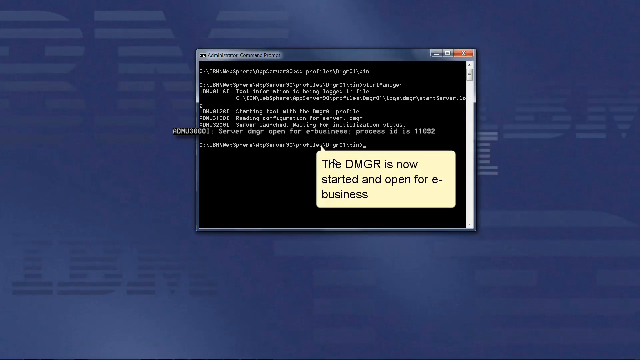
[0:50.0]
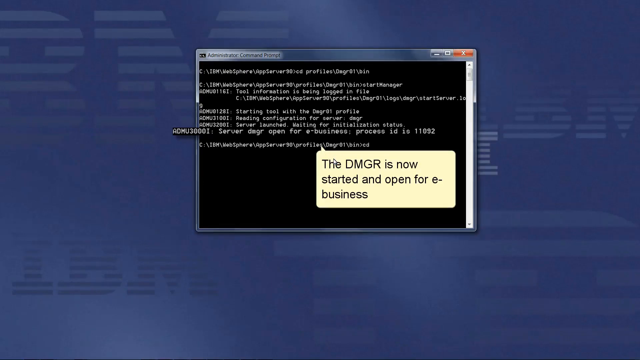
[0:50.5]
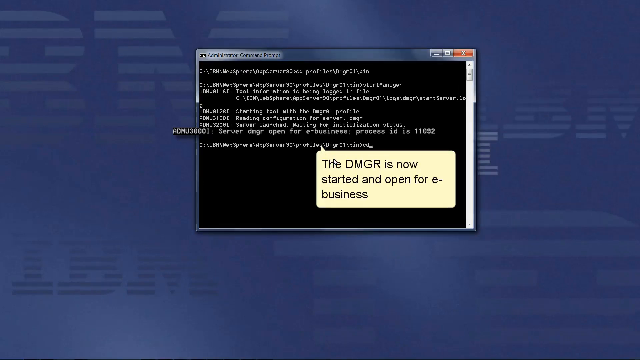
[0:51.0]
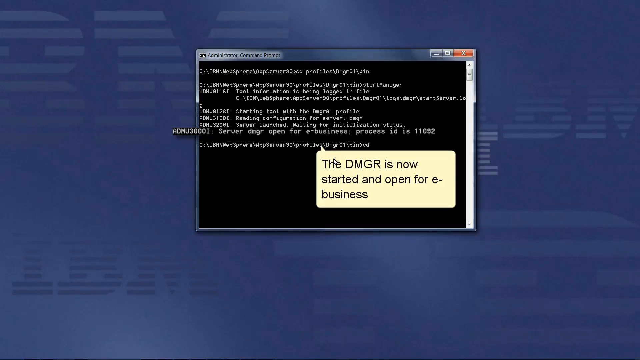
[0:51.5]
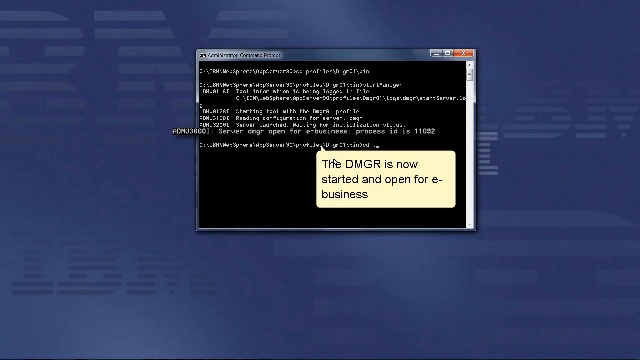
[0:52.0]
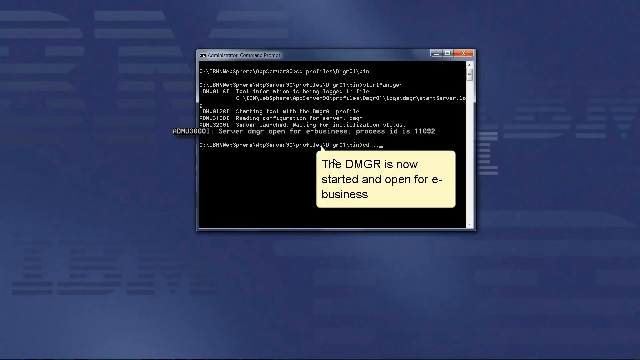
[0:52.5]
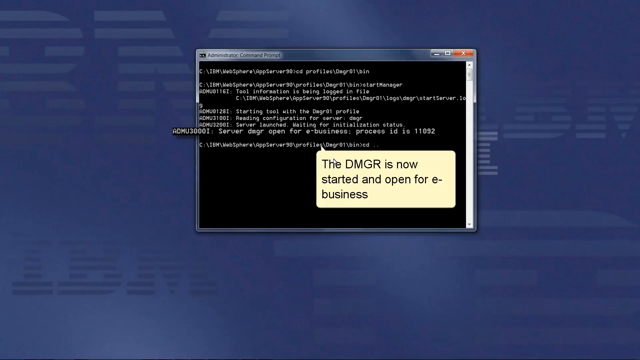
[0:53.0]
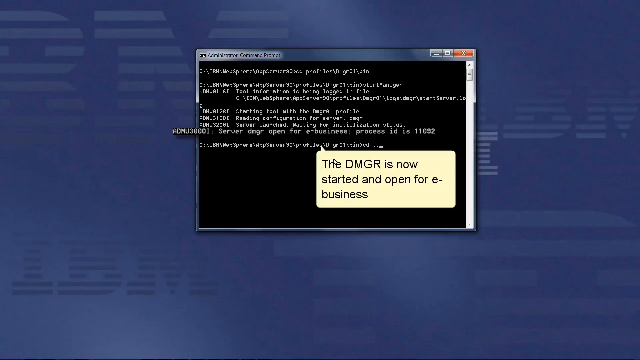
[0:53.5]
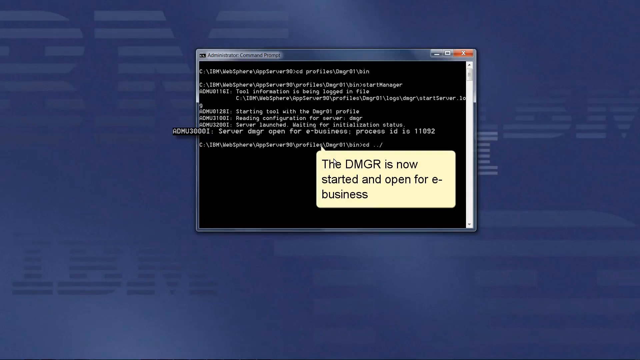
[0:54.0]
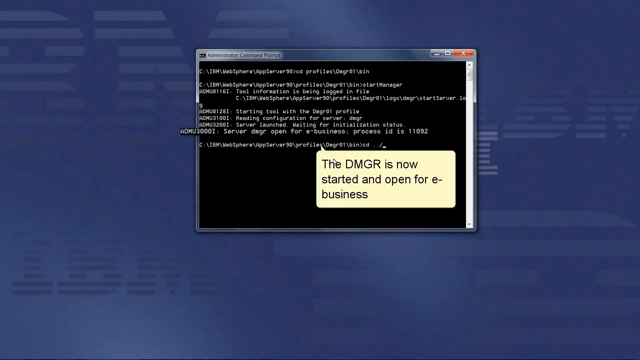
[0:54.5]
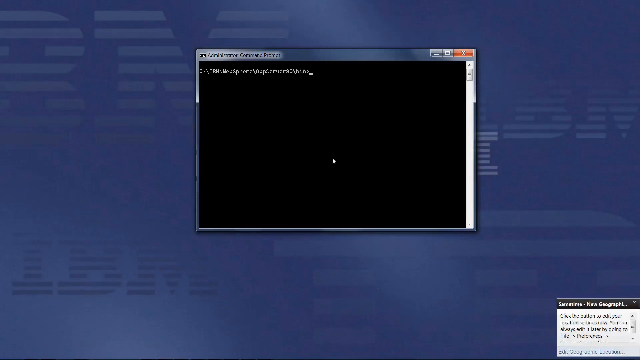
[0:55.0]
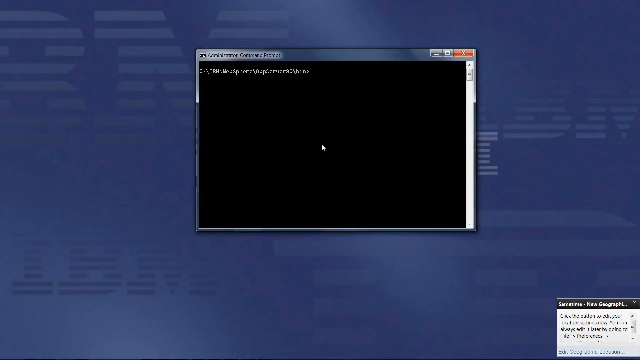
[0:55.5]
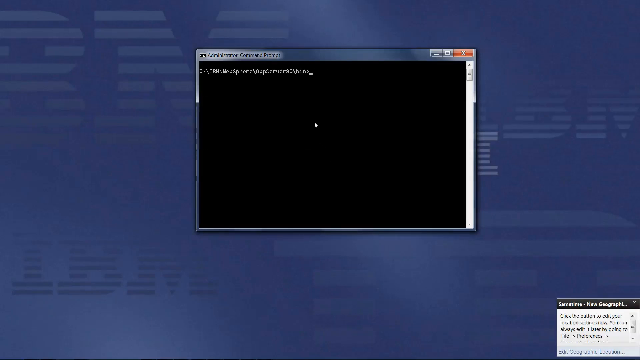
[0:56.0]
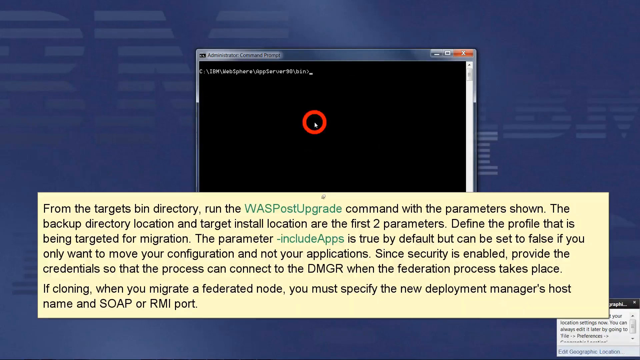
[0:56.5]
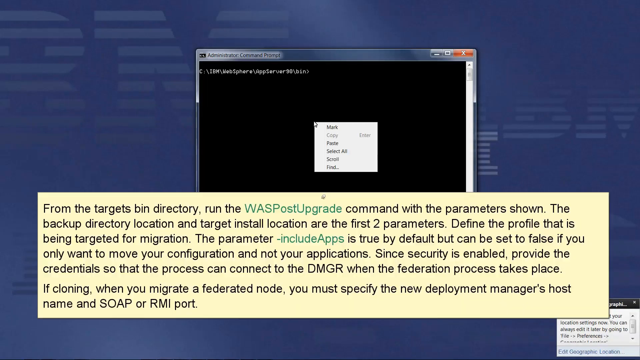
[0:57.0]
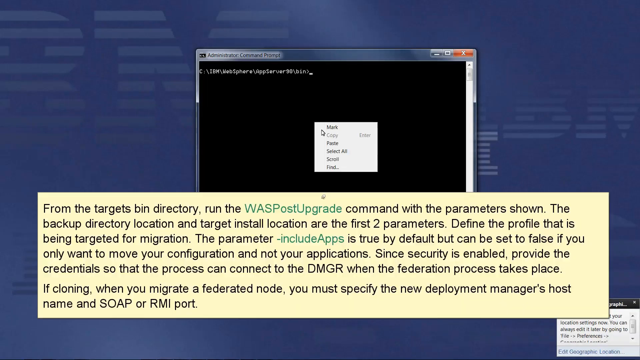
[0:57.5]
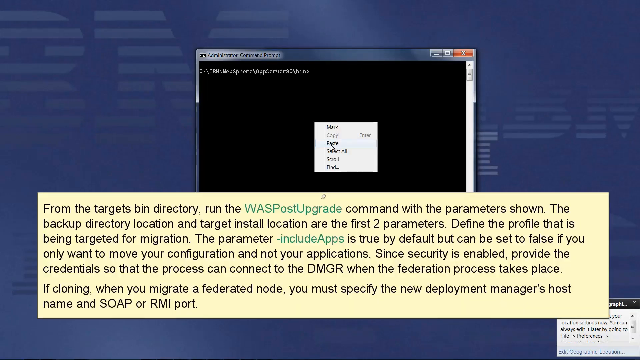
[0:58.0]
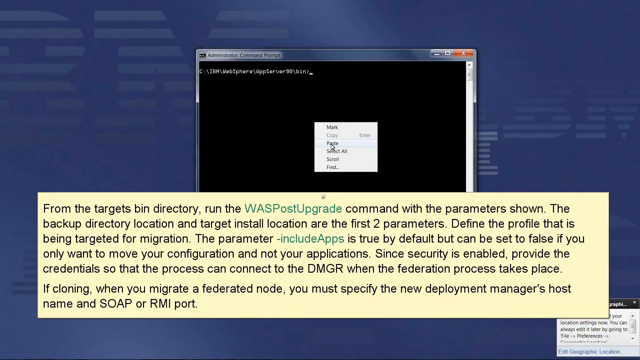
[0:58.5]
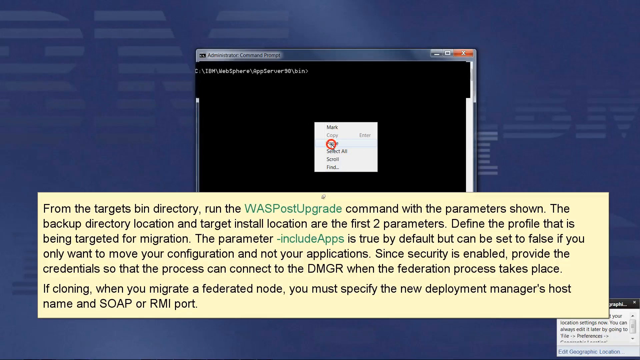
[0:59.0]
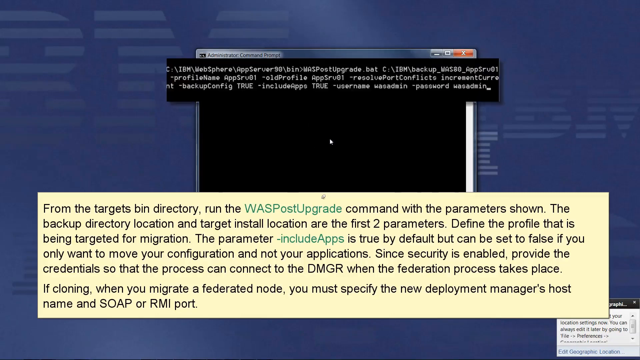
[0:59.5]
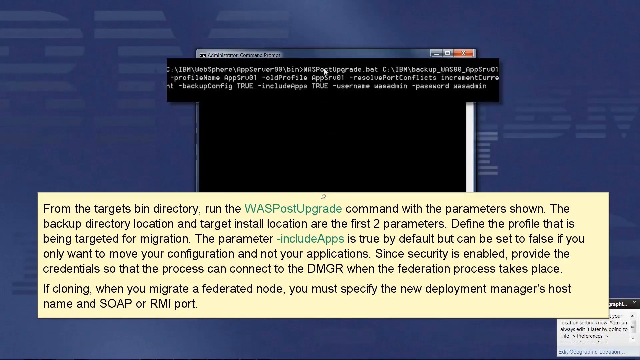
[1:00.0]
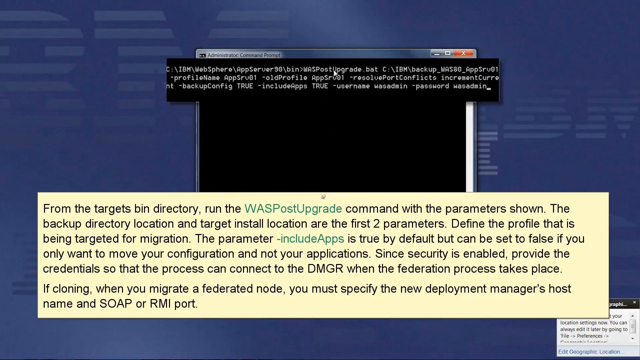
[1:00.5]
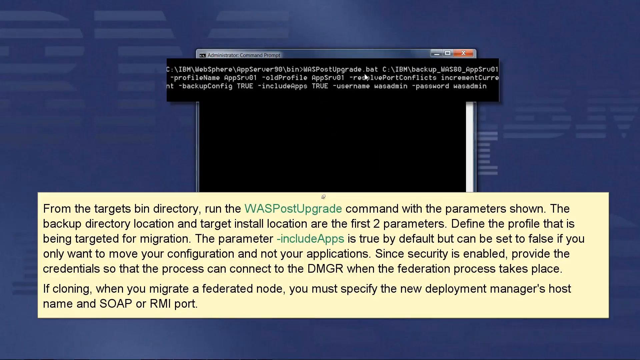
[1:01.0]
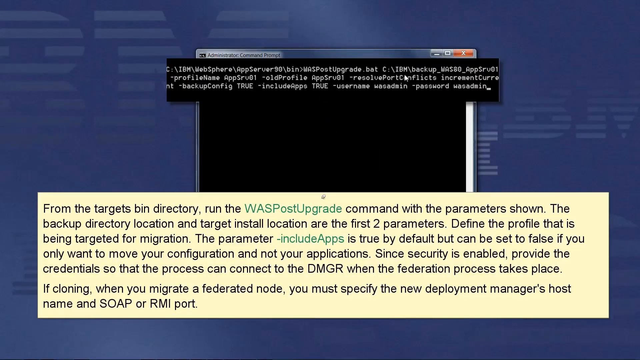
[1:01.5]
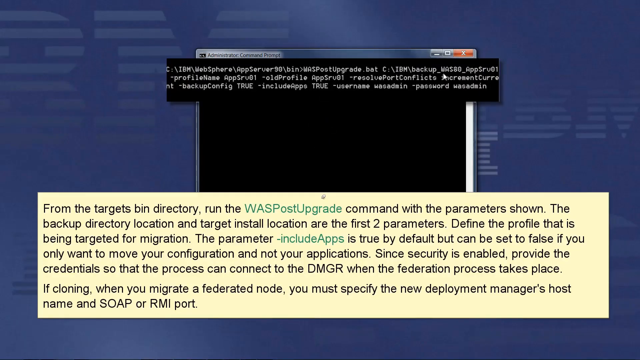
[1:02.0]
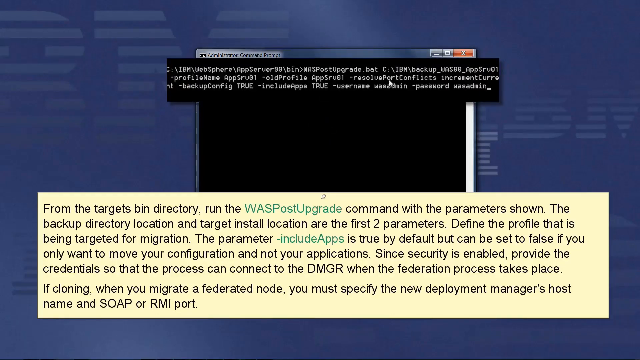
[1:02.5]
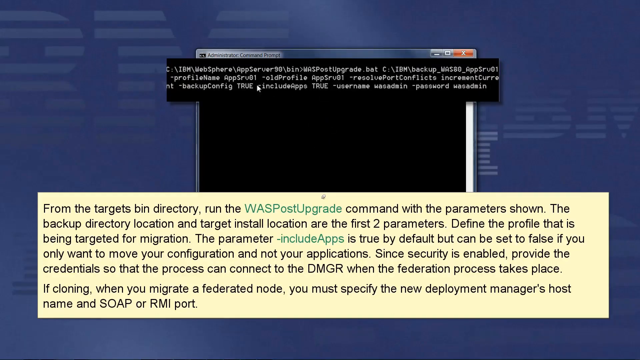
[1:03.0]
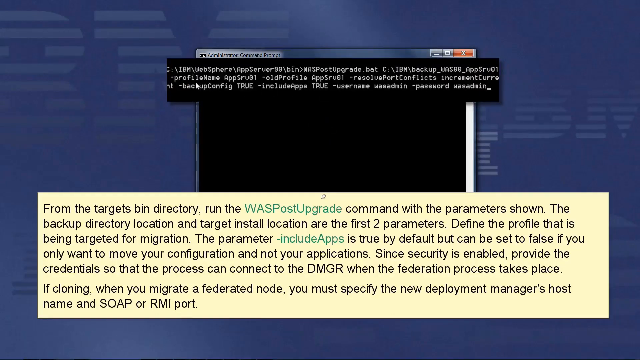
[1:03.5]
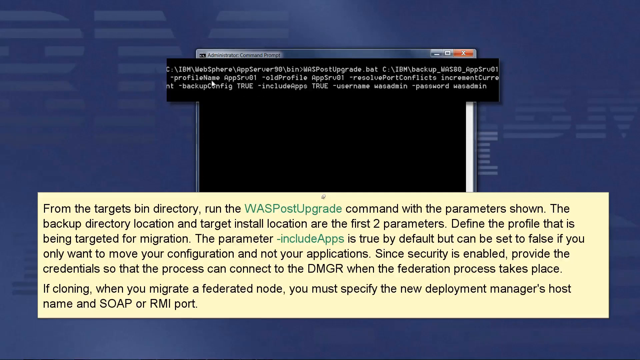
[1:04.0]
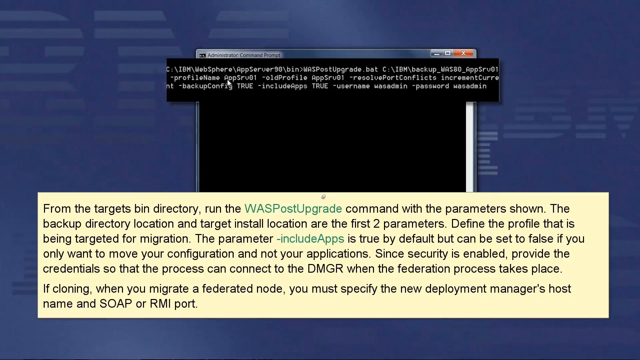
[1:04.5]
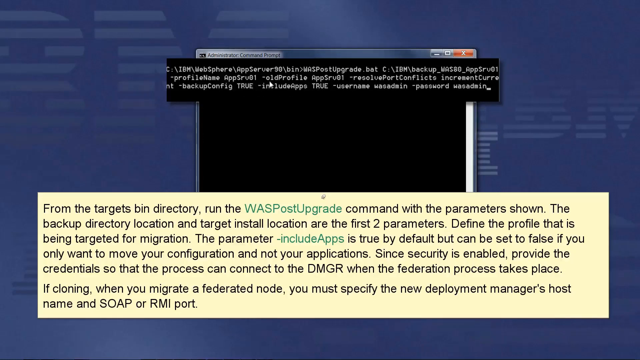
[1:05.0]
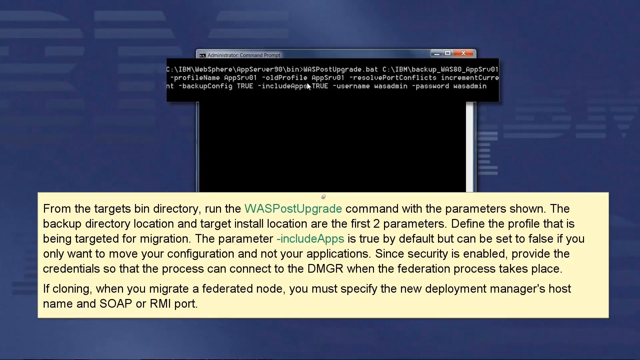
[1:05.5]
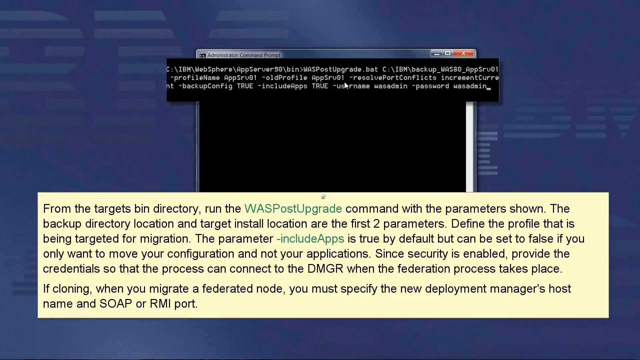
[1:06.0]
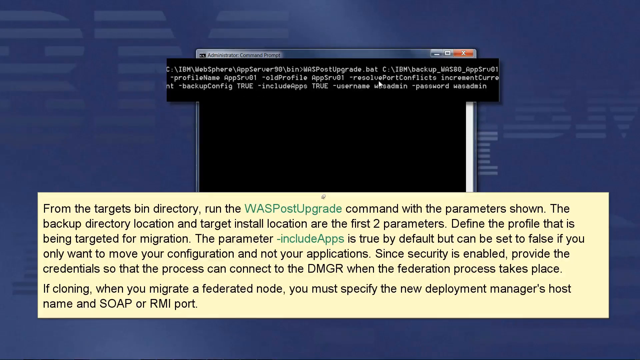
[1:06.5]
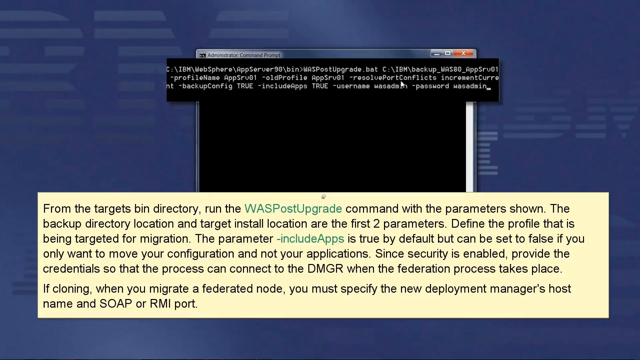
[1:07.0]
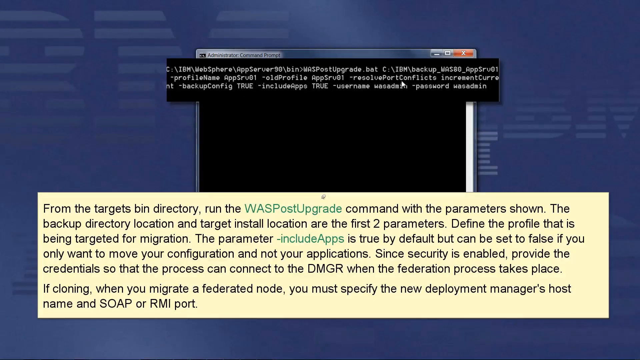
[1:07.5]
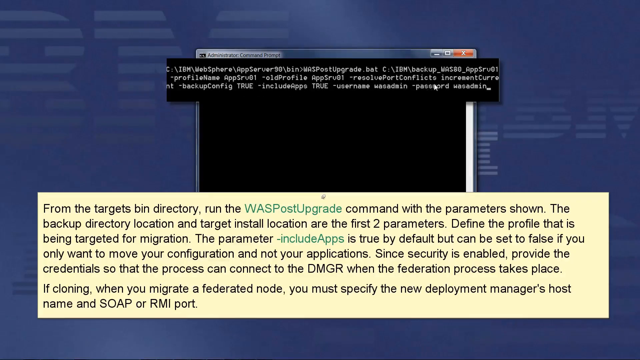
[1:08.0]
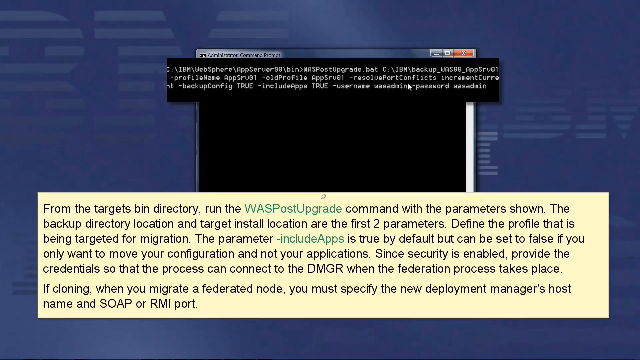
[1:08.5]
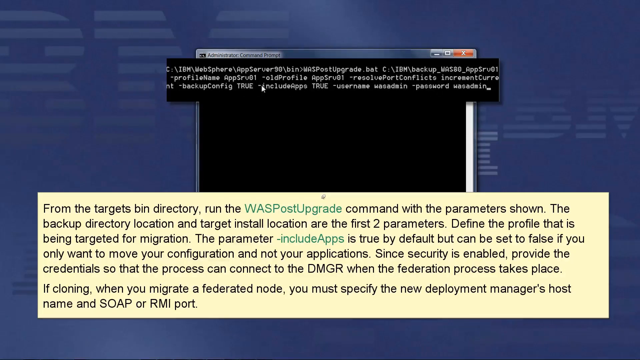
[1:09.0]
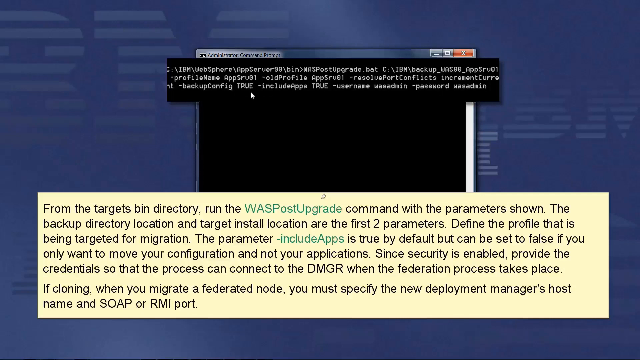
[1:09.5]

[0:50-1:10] The command prompt window is open with a light yellow text box over it that reads "the DMGR is now started and open for e-business." The user types "cd ../..", and then what looks like a new command prompt window opens. On the bottom right-hand side of the screen, a pop-up reads "summertime new geographic" before being cut off, with a box of text inside it. The user right-clicks on the command prompt and selects paste from the menu that pops up, and the pasted text is kind of magnified so it pops out of the command prompt box and becomes bigger. A large yellow rectangular box at the bottom of the screen gives directions on what to run in the target bin directory. The user hovers the mouse over the magnified text, moving it left to right as if reading everything.